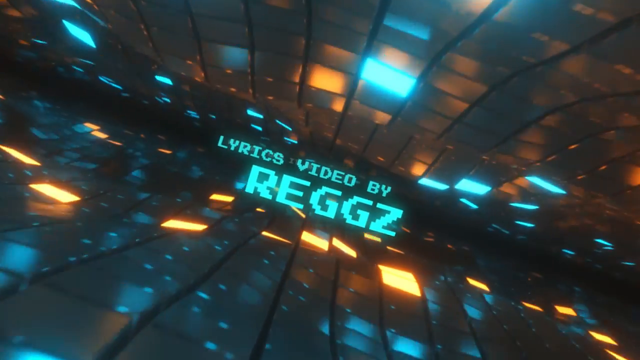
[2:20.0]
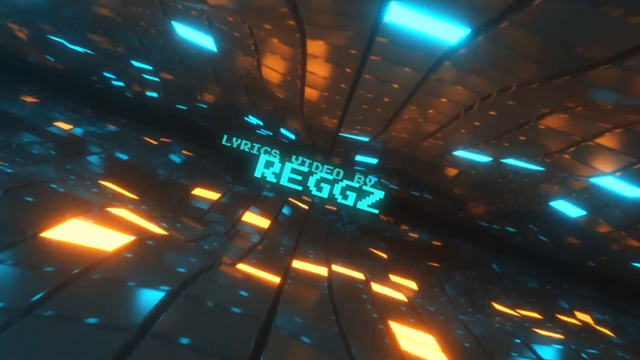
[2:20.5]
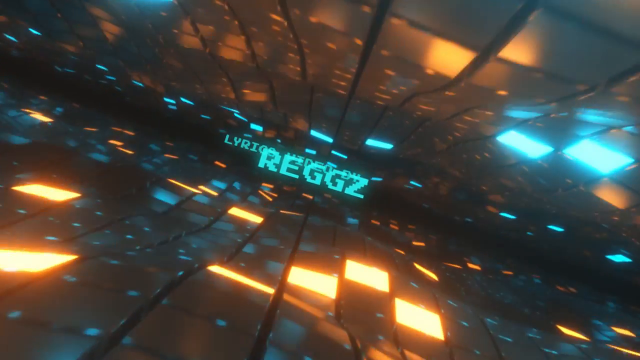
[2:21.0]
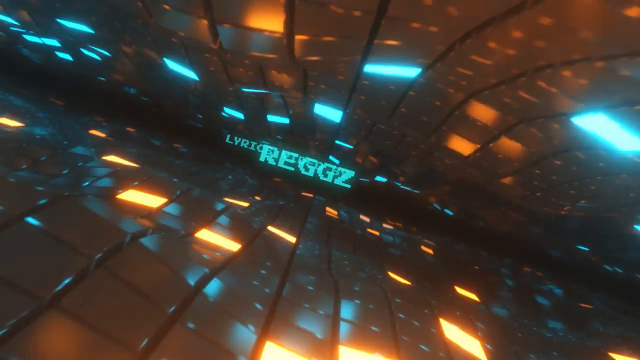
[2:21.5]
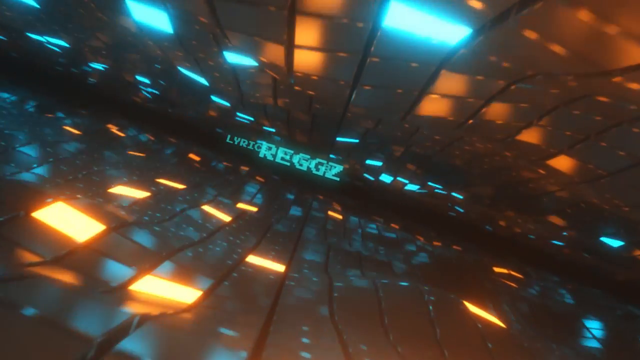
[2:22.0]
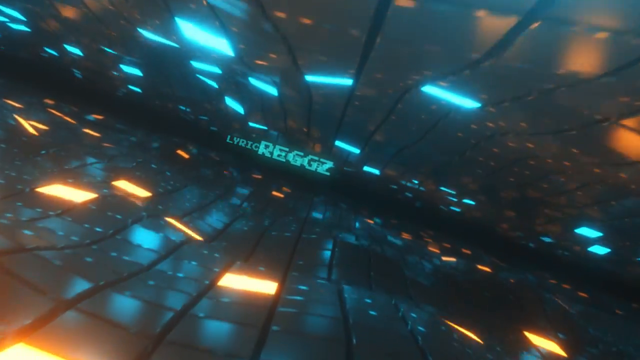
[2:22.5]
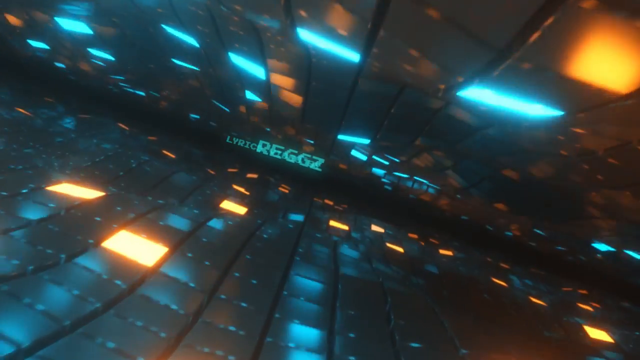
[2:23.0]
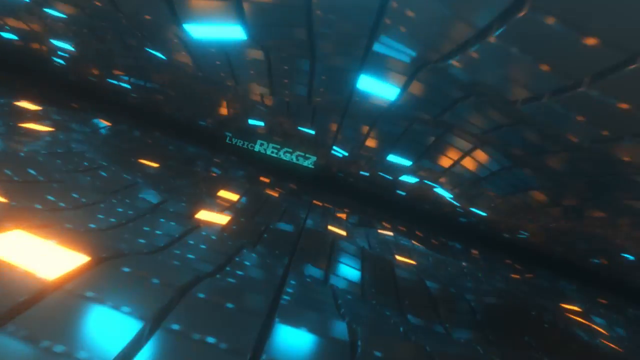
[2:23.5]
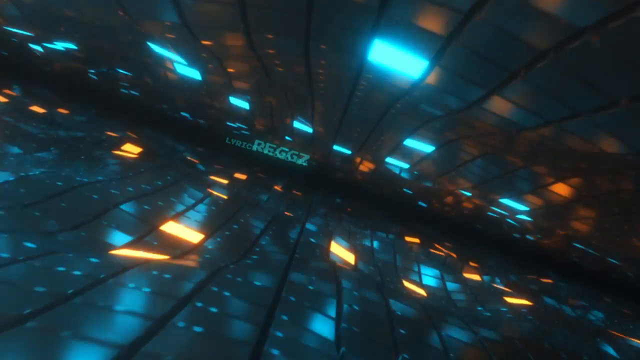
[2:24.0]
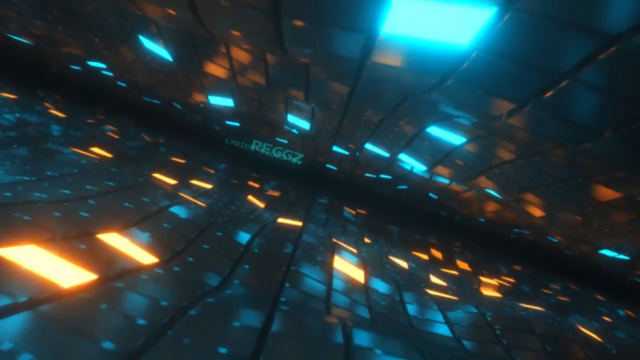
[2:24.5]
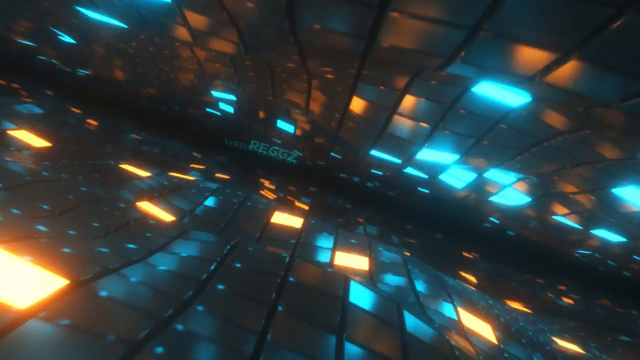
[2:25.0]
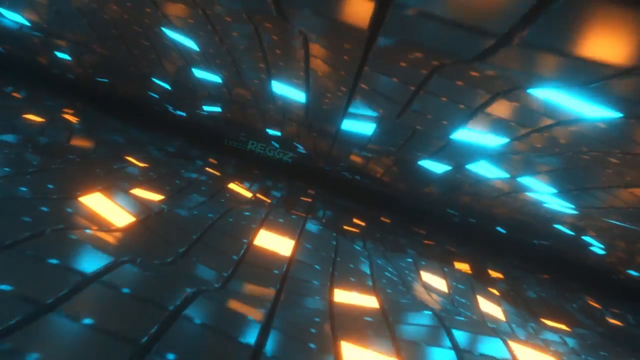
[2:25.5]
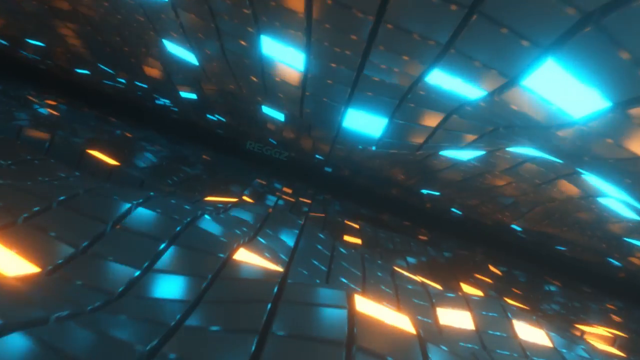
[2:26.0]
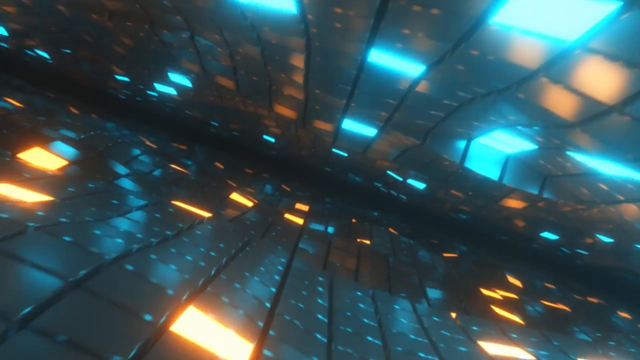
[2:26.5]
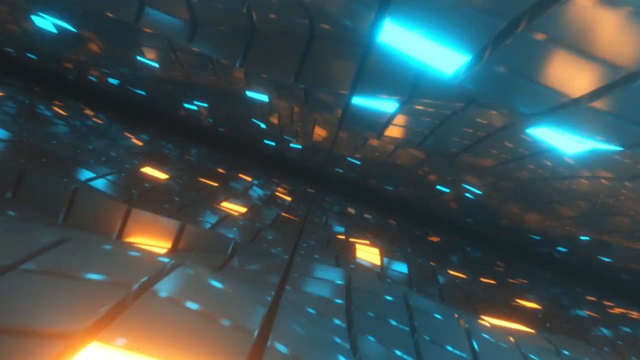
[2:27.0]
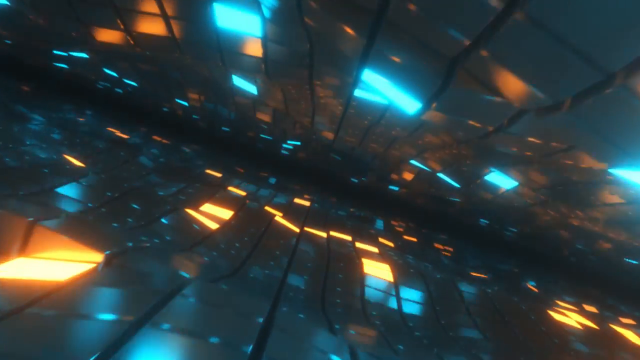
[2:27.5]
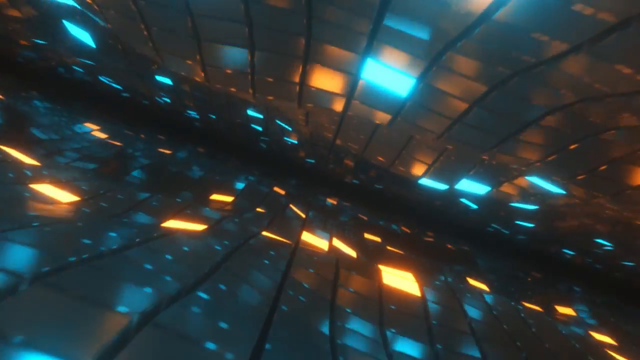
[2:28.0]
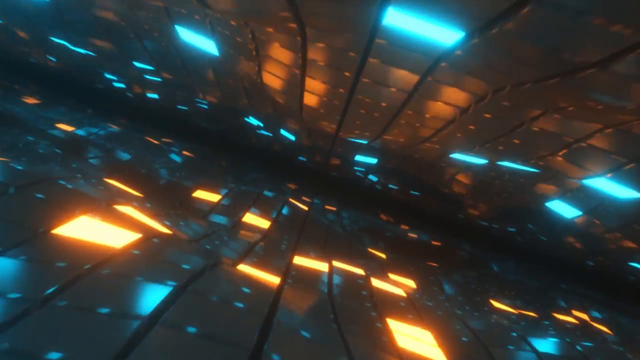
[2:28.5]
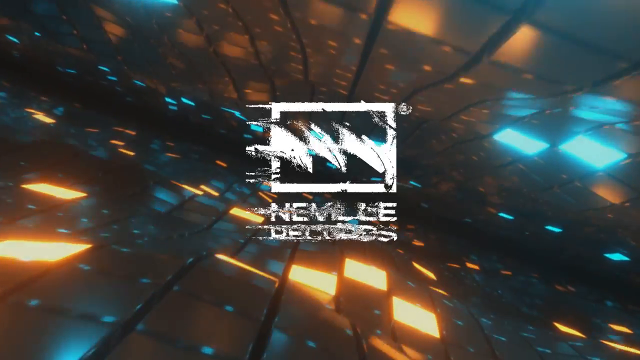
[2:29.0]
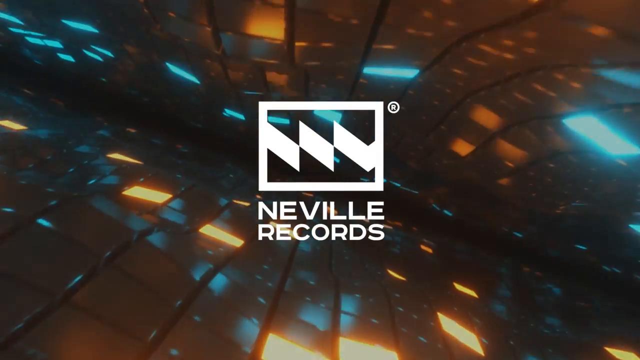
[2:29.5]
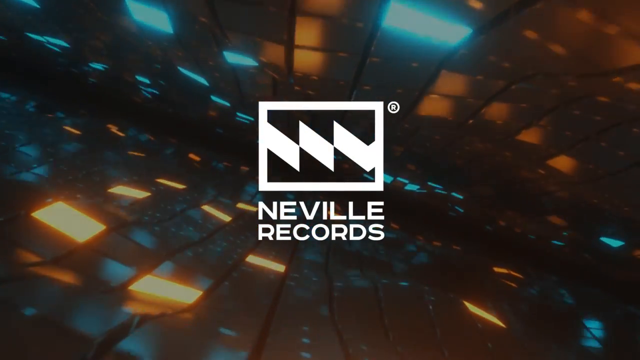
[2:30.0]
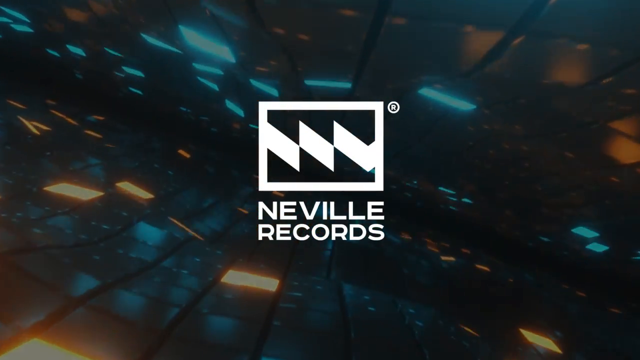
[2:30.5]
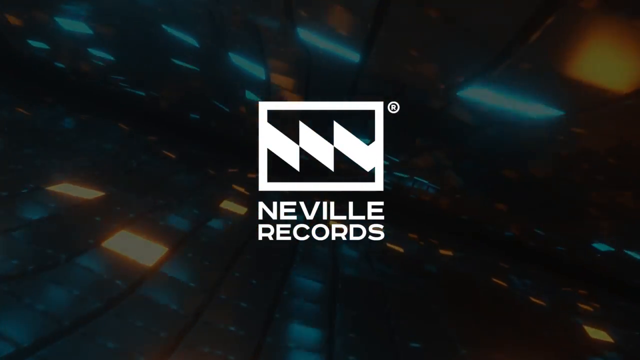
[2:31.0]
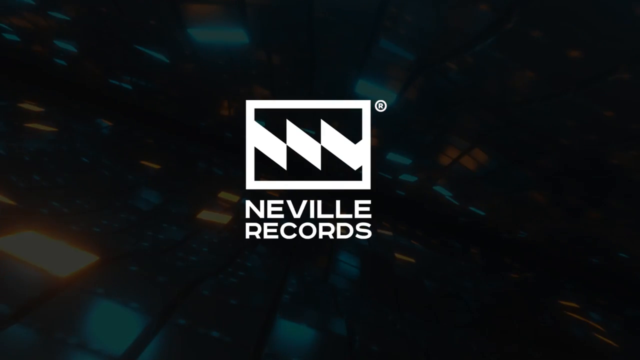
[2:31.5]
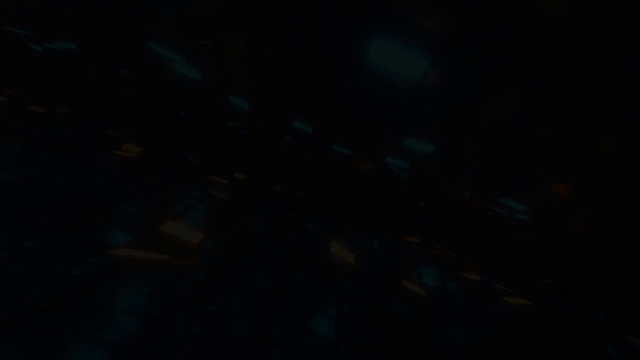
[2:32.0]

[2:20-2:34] The credits continue, still showing "Lyrics video by Reggz" in the same bitmap, retro video game style pixel-based font. The scene is still the wavy room of tiled lights on the ceiling and floor, set at a diagonal from the top left to the bottom right. The last bit of the credits sort of fades into the far distance of the room, toward the horizon line. The Neville Records logo appears again, and everything, including the lights, fades to black. The character is not seen in this scene.